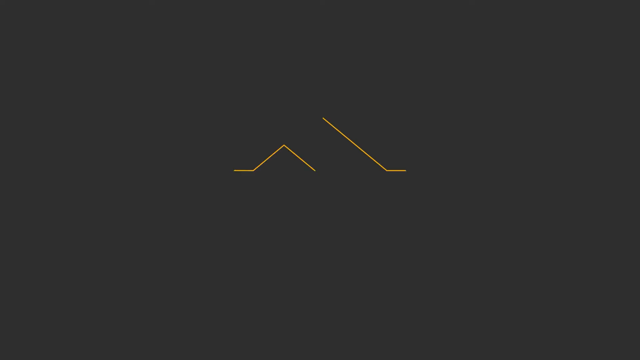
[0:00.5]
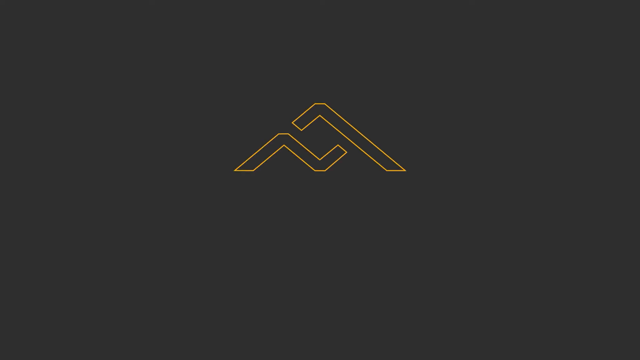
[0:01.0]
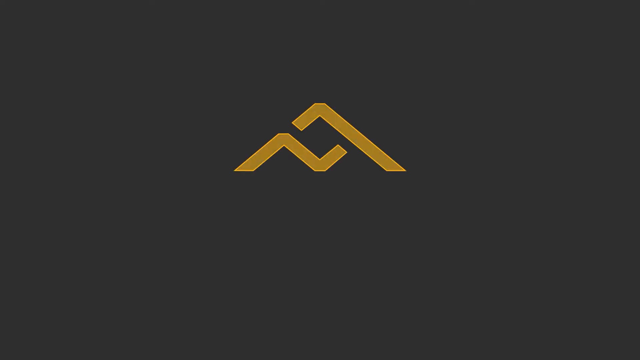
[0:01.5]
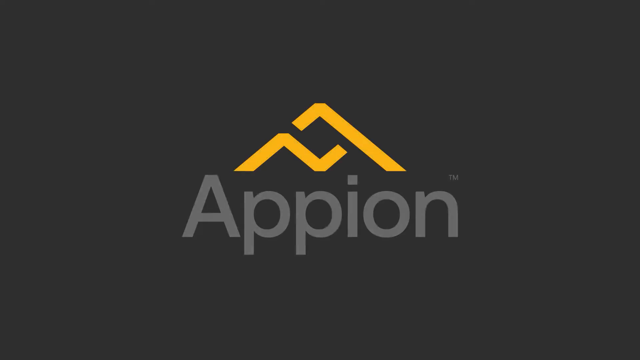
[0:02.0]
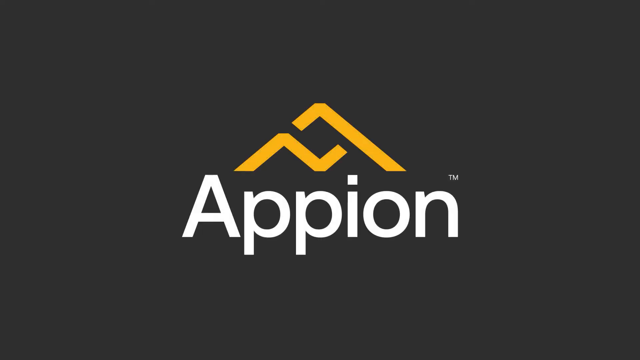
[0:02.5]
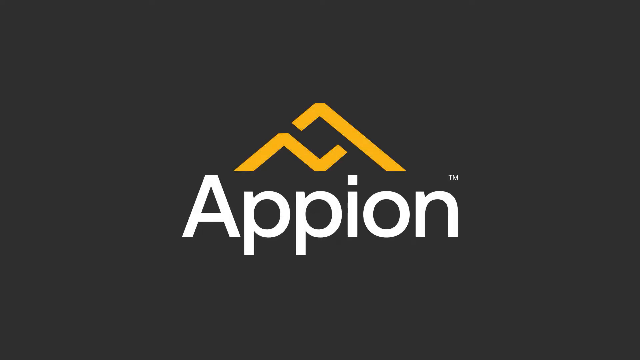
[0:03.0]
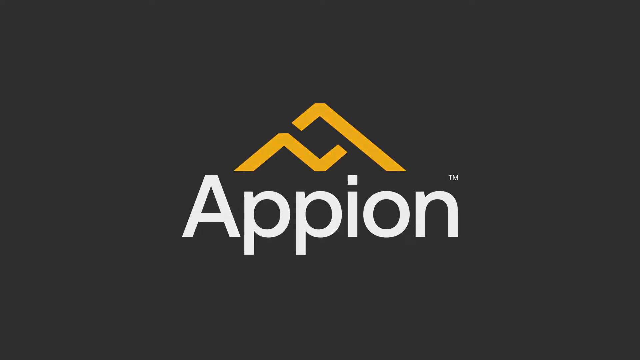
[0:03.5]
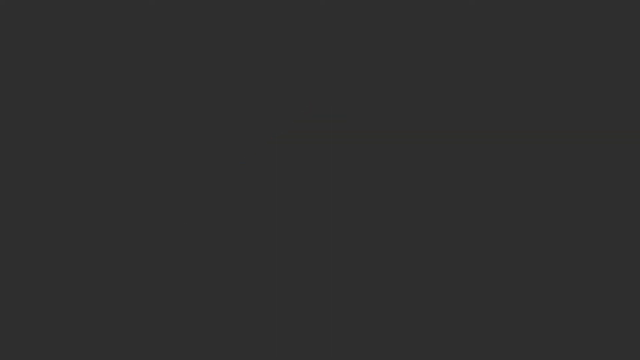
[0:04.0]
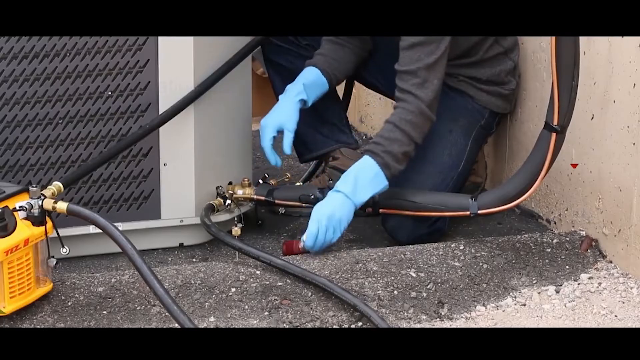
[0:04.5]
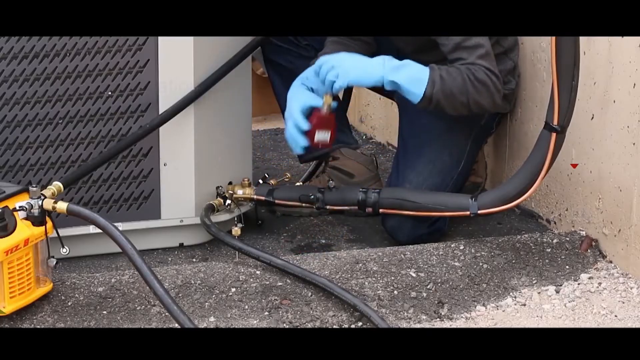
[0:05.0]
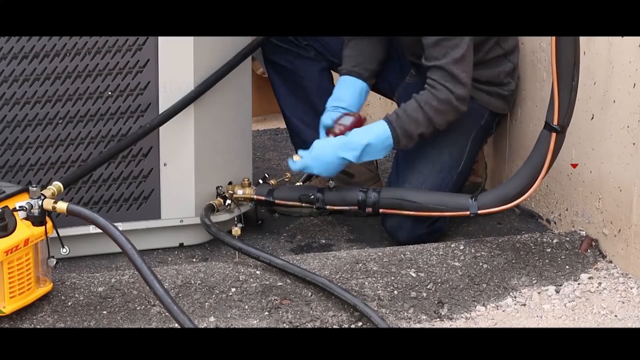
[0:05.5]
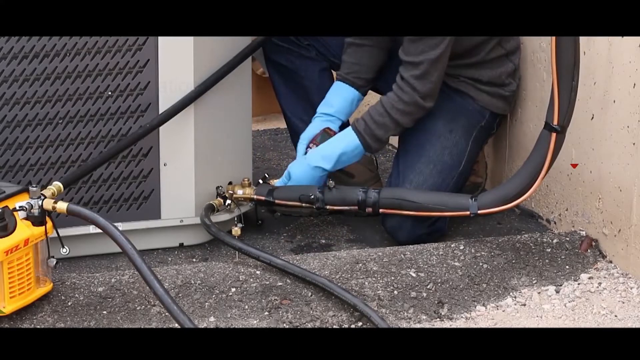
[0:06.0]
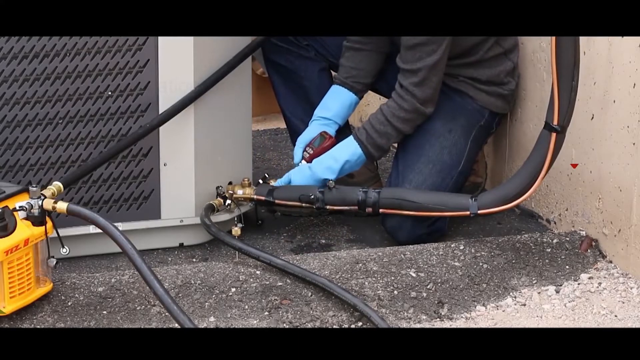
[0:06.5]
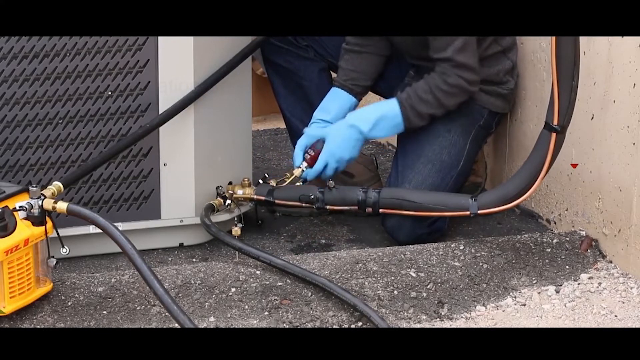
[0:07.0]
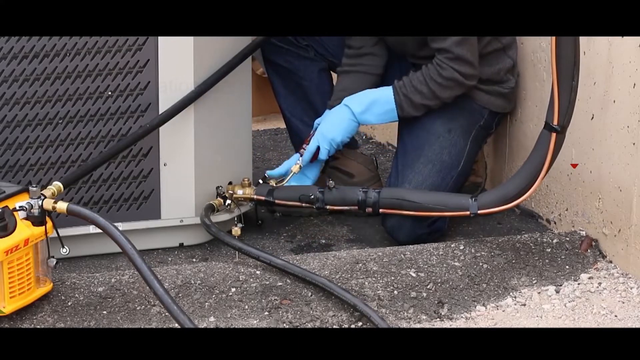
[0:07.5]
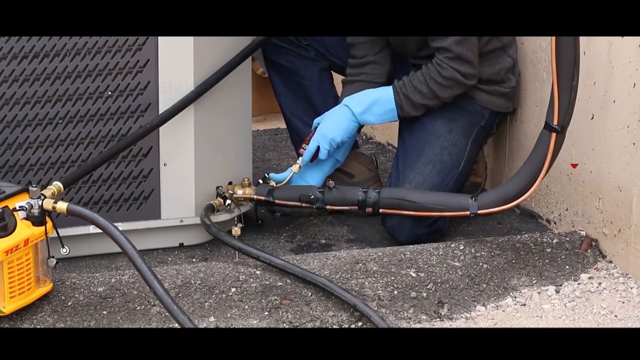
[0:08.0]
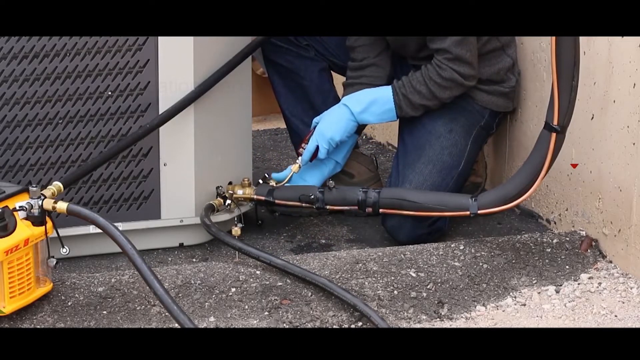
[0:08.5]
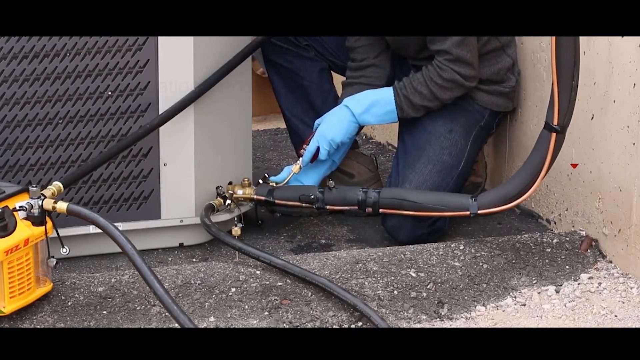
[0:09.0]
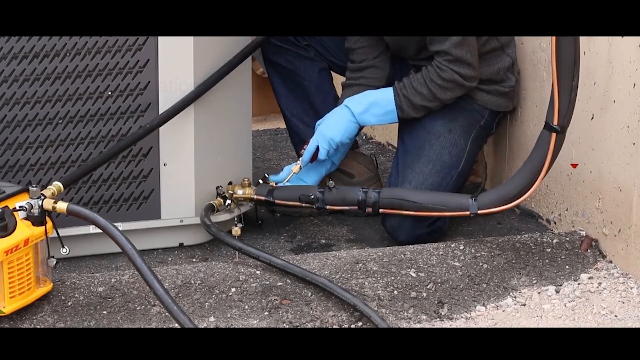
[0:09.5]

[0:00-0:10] The video opens on a gray background with an intro animation of a yellow triangle: first its lines appear, and then it slowly fills in. Underneath it is the text "Appion", with a trademark symbol at its top right. The video then cuts to a shot of a gloved person whose upper body is out of frame. They are operating what looks like a screwdriver or some sort of tool, possibly on a tube for what appears to be a gas line, perhaps for coolant or some kind of HVAC system.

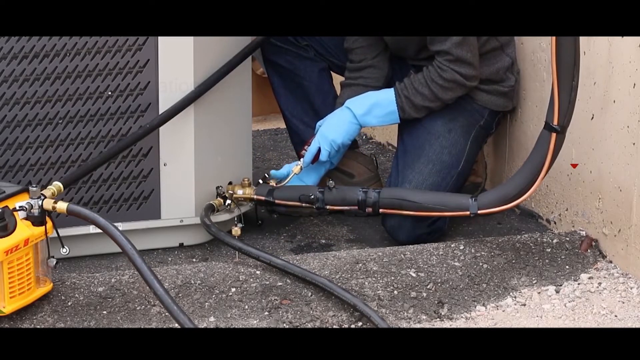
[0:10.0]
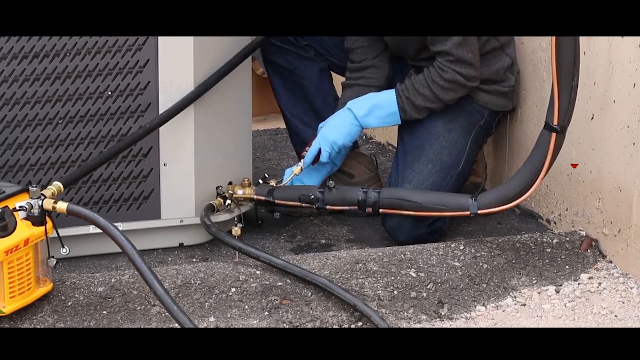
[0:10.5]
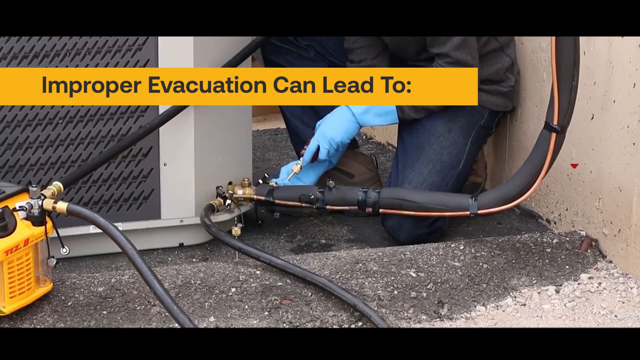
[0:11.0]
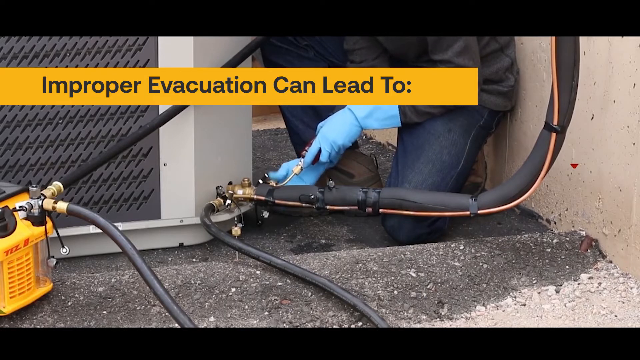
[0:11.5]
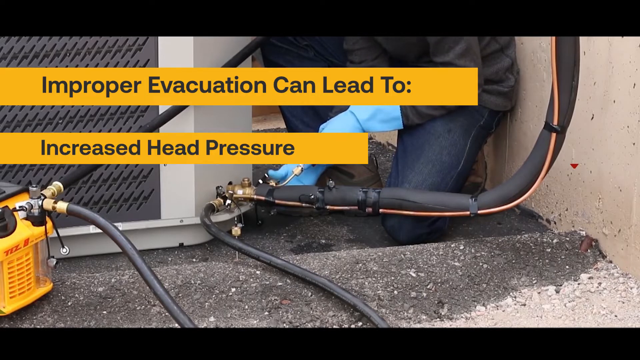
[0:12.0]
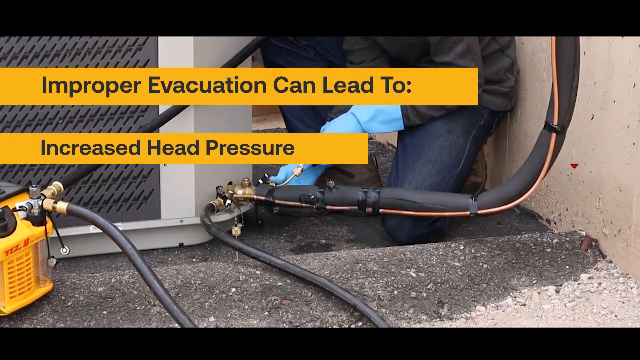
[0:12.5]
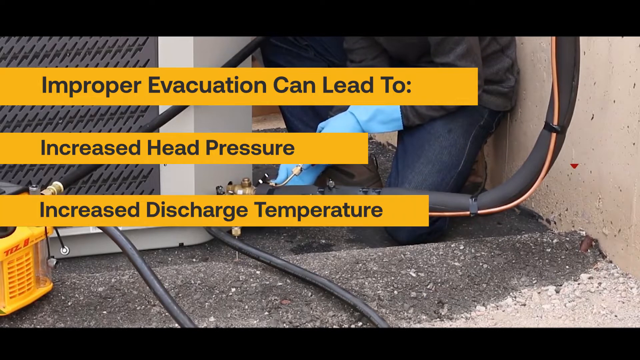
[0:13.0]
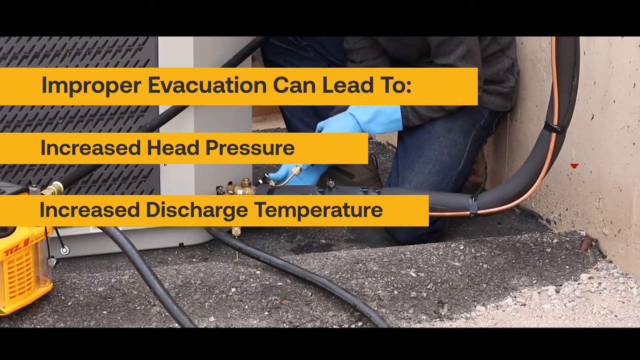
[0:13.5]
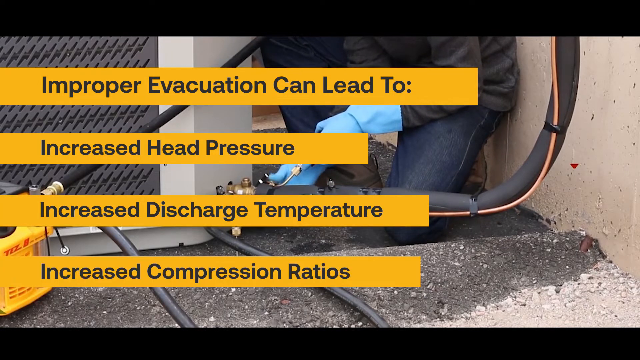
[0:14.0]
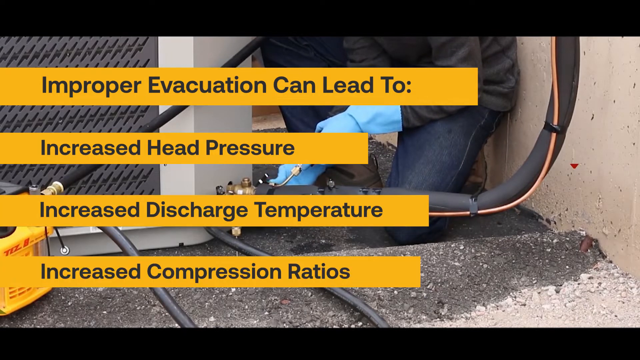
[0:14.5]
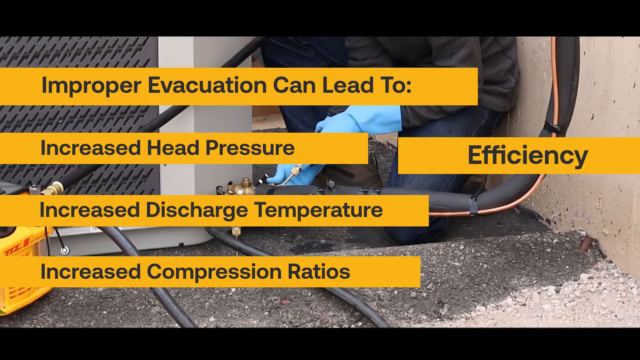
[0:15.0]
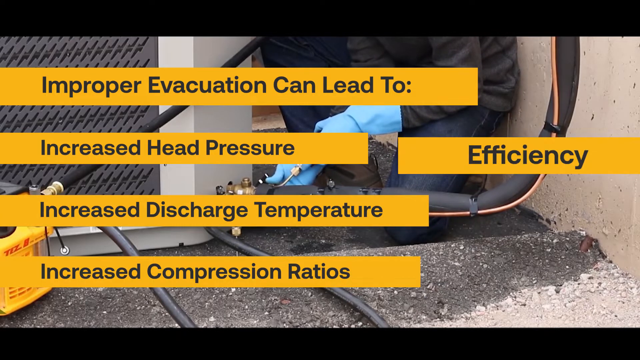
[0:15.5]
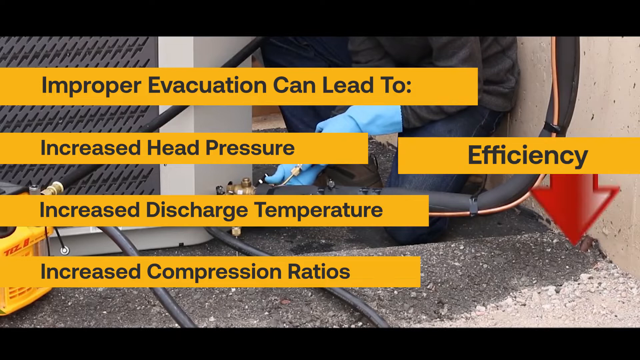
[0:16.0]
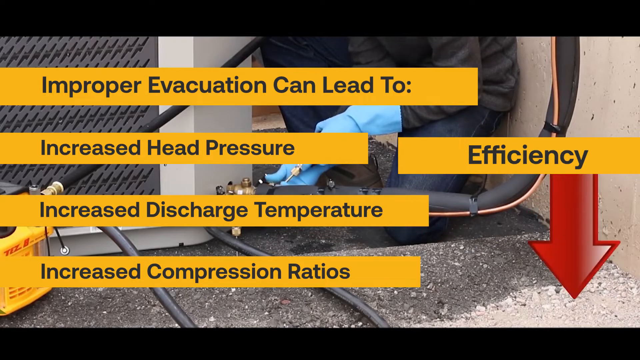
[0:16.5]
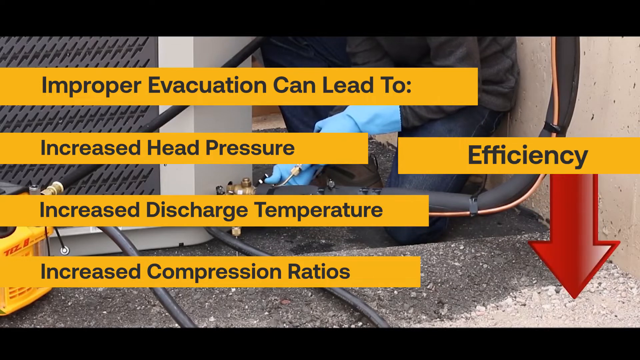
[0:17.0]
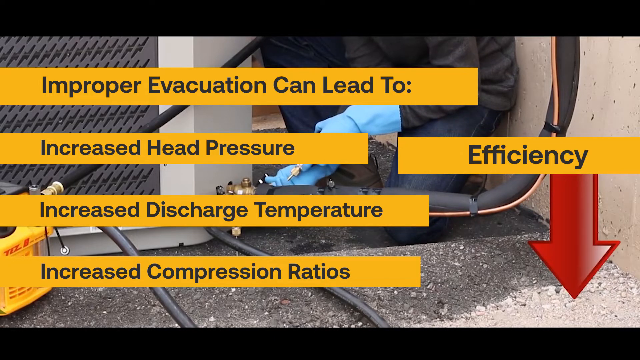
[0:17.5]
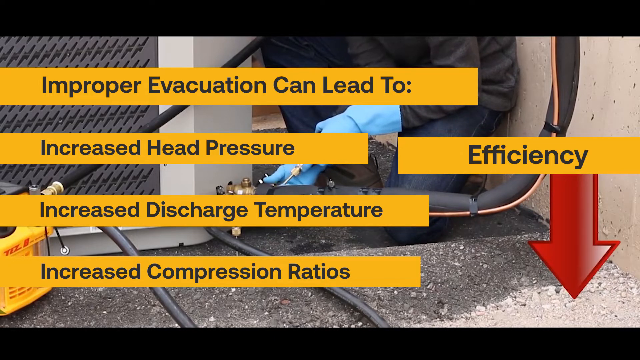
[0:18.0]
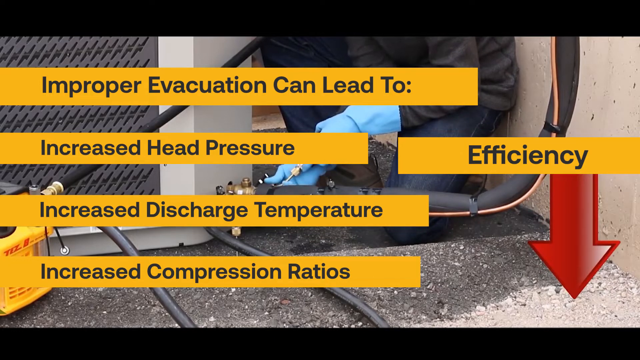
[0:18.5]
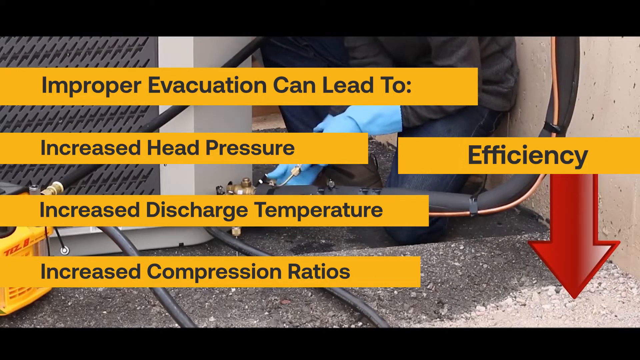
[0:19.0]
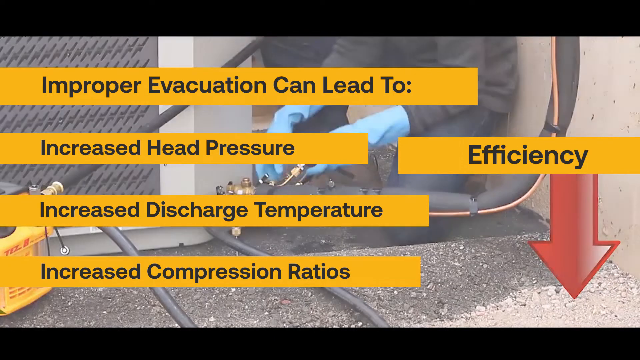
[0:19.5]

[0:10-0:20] The person works on what appears to be a tube, twisting a part on it while holding some sort of tool that is not a screwdriver. Text boxes on an orange background appear on screen about improper evacuation and its negative effects: increased head pressure, increased discharge temperature, increased compression ratios, and efficiency with a red arrow pointing down. The footage then briefly fades out into a white glare.